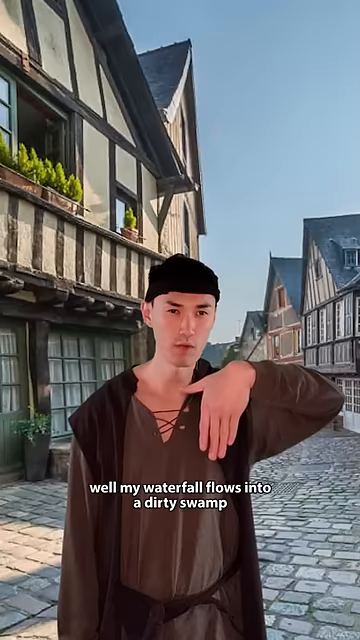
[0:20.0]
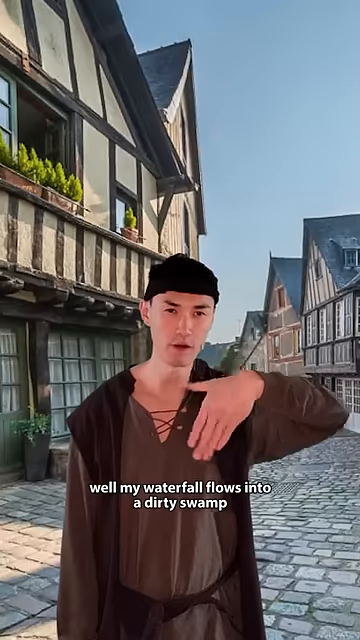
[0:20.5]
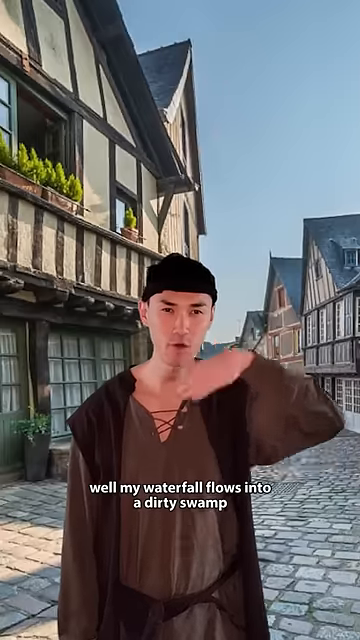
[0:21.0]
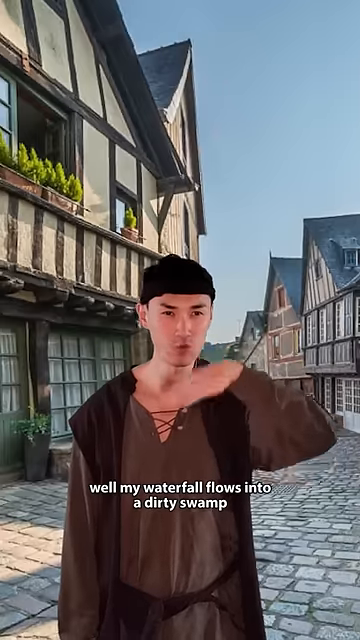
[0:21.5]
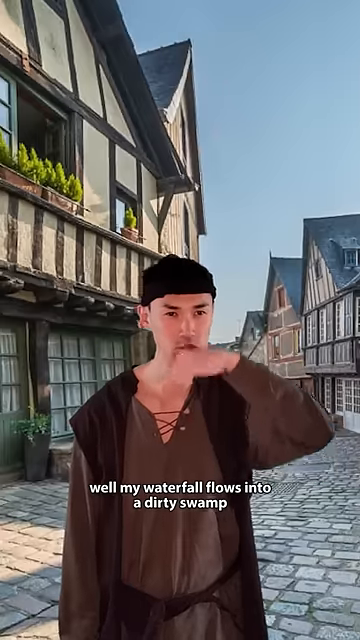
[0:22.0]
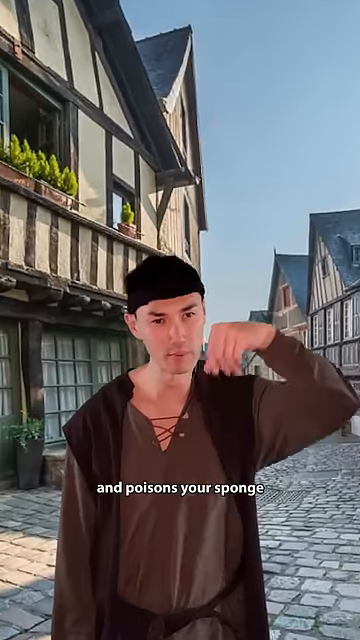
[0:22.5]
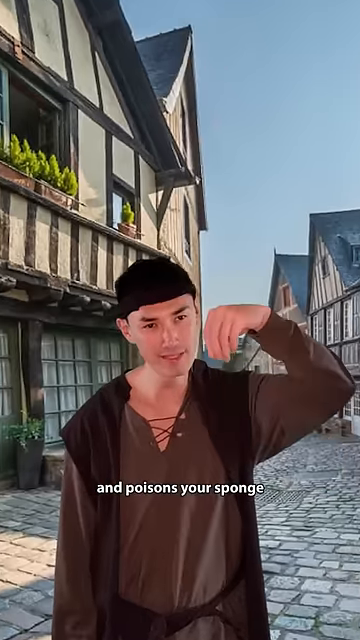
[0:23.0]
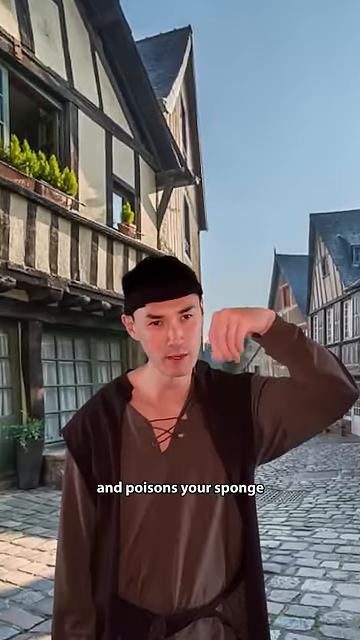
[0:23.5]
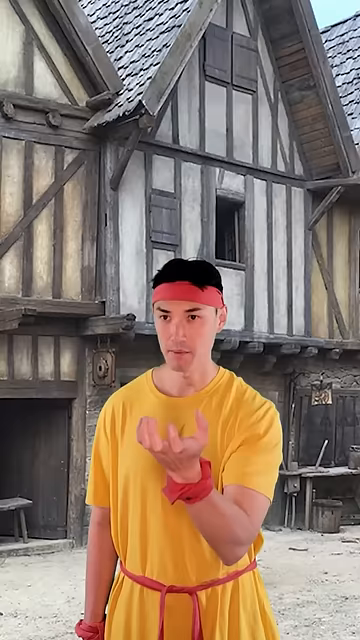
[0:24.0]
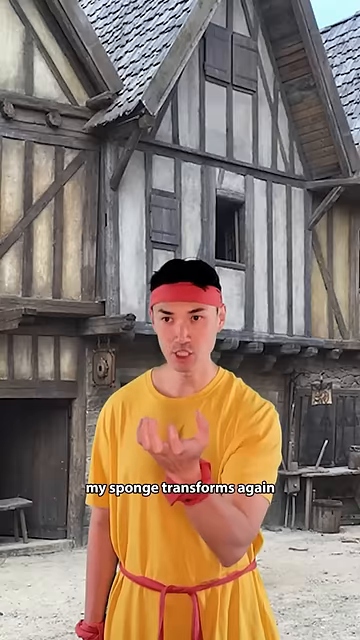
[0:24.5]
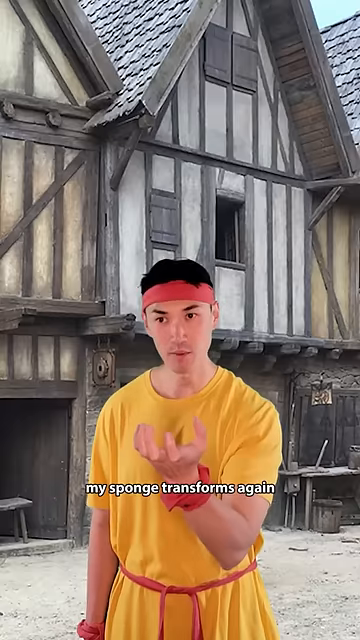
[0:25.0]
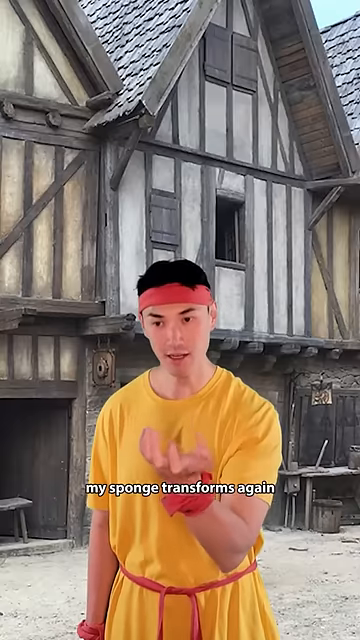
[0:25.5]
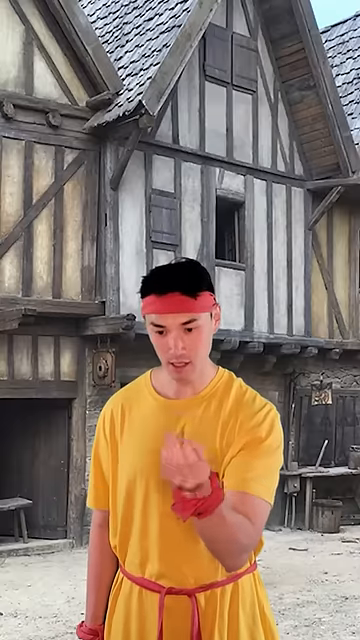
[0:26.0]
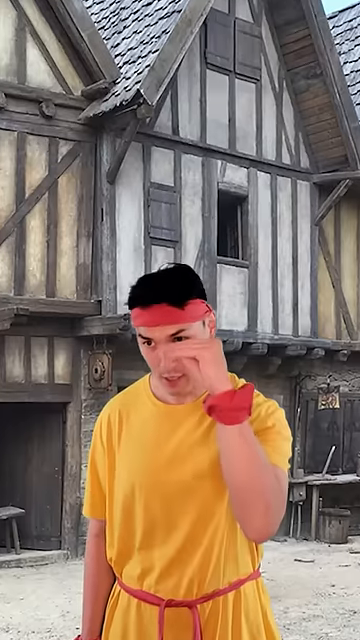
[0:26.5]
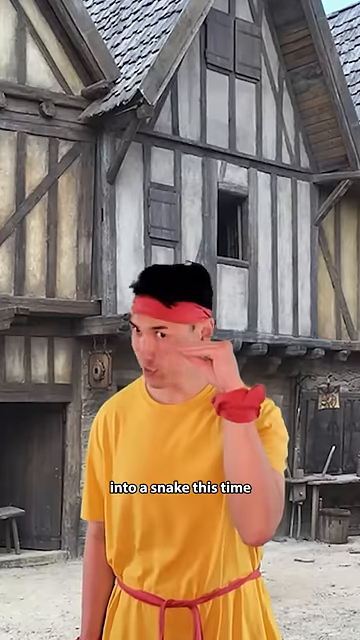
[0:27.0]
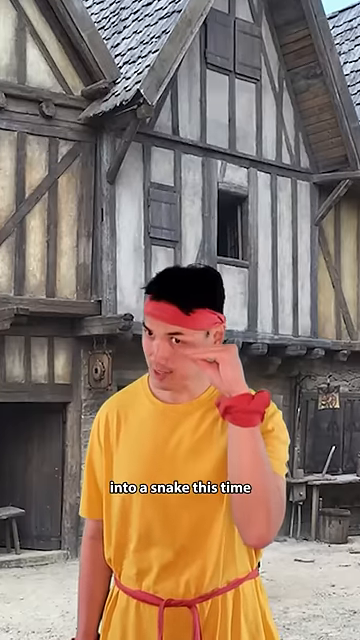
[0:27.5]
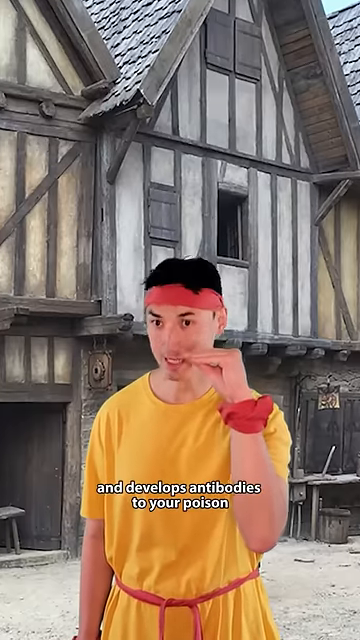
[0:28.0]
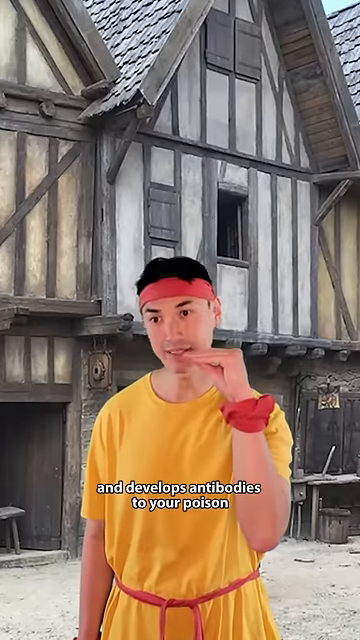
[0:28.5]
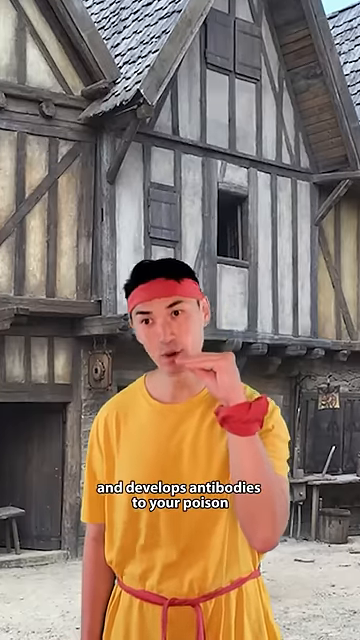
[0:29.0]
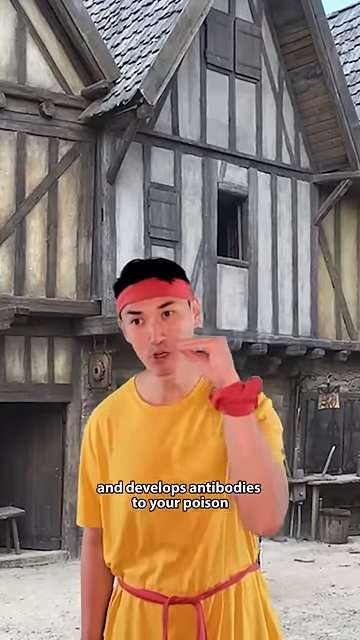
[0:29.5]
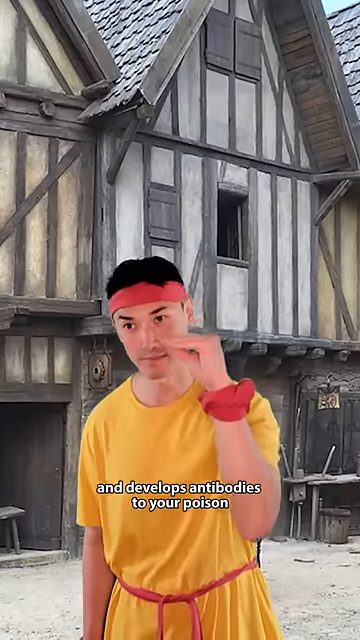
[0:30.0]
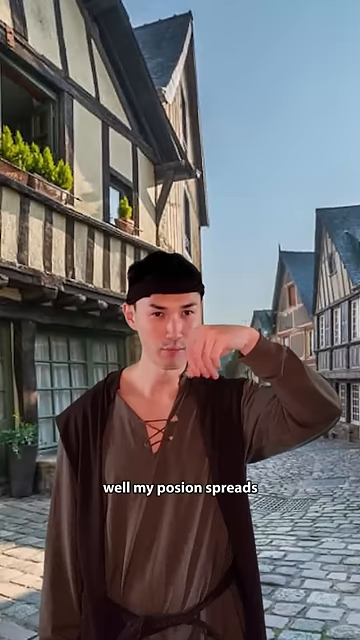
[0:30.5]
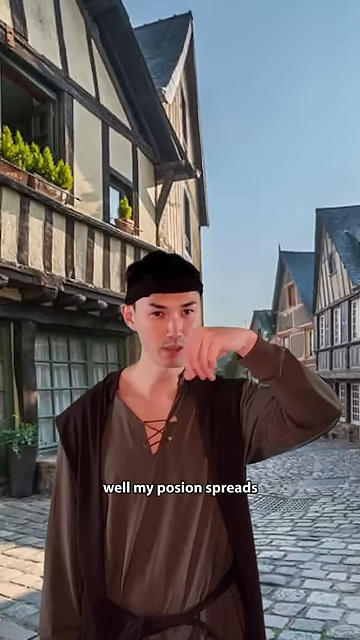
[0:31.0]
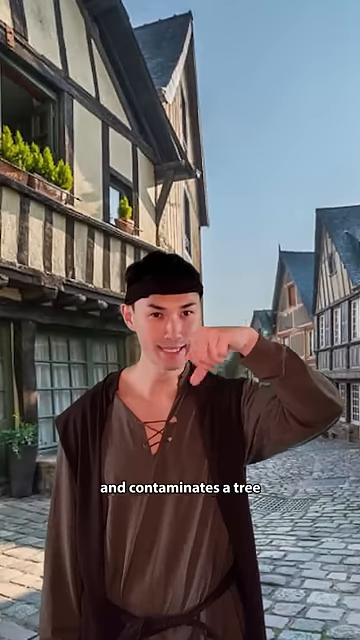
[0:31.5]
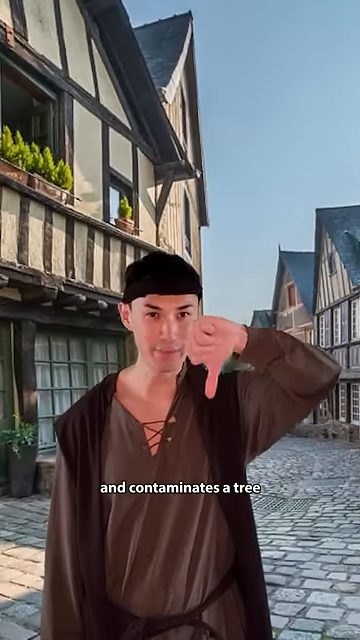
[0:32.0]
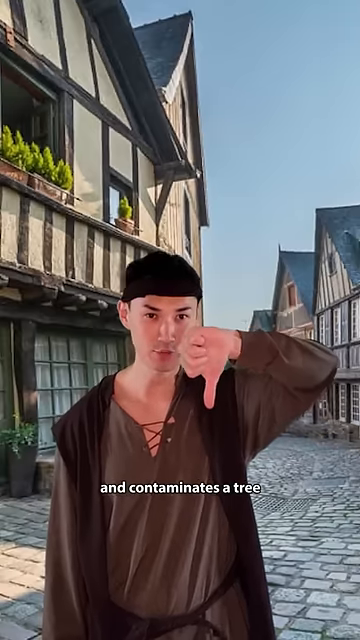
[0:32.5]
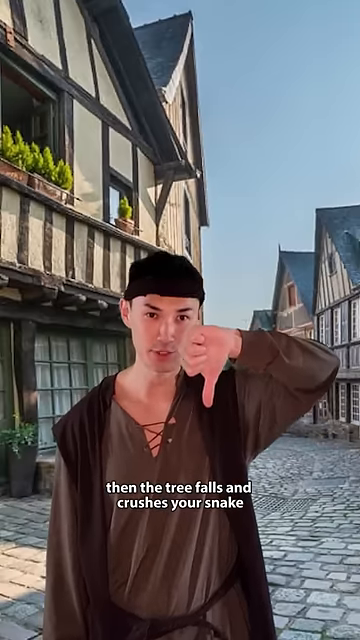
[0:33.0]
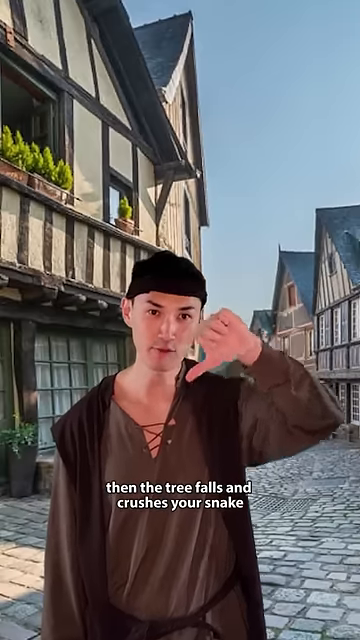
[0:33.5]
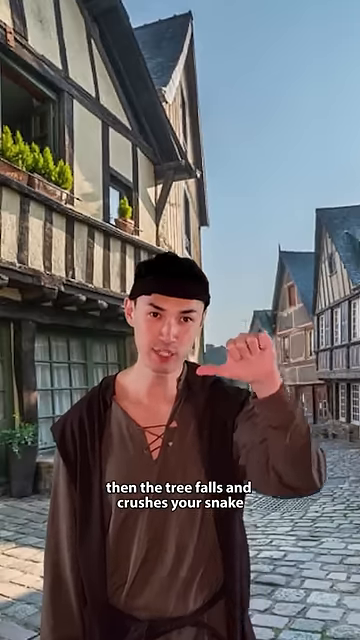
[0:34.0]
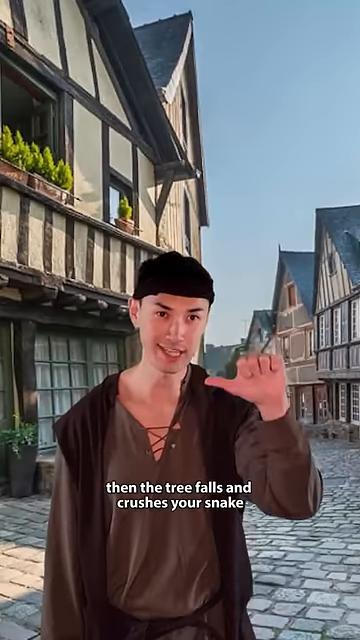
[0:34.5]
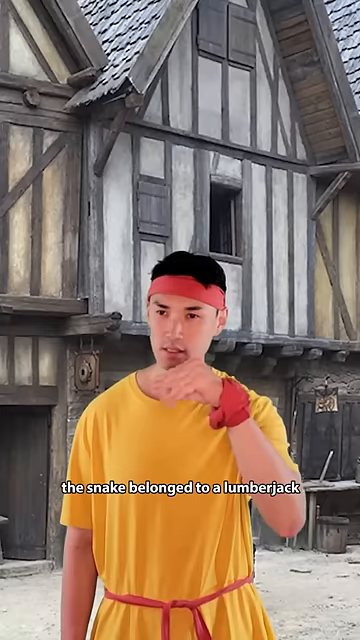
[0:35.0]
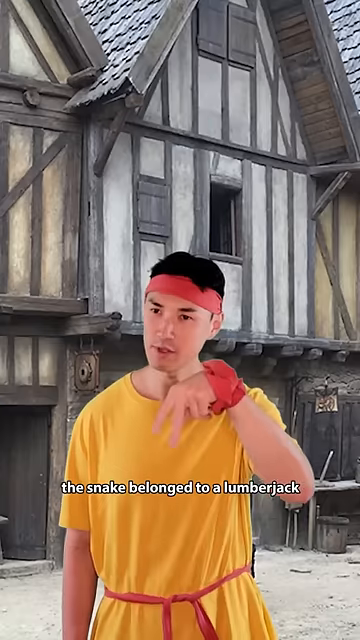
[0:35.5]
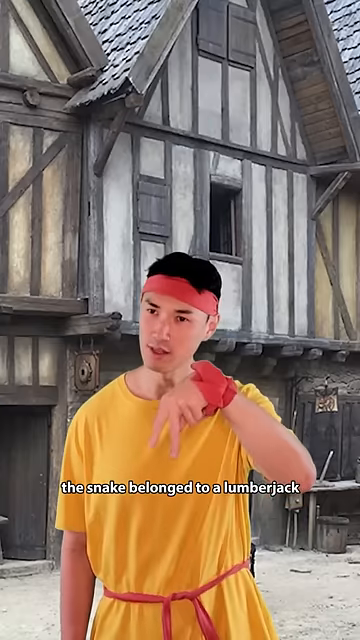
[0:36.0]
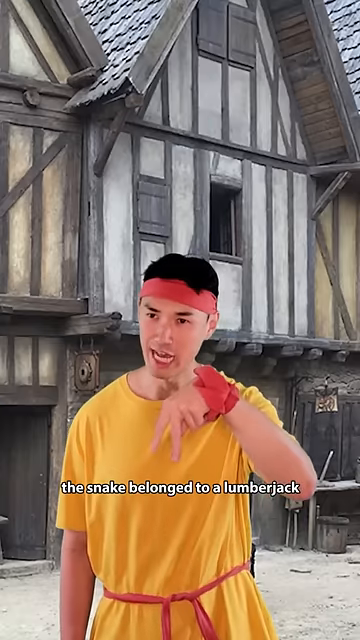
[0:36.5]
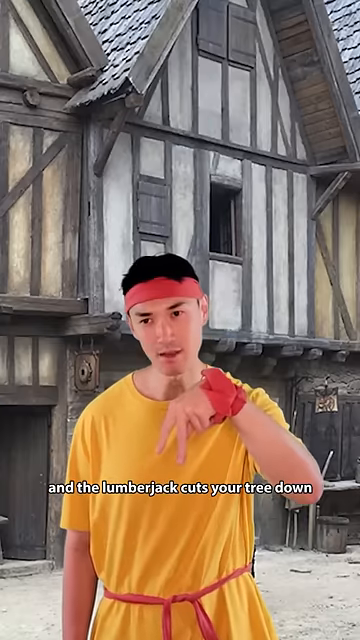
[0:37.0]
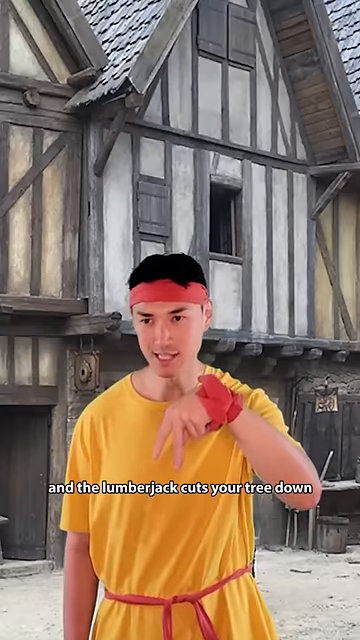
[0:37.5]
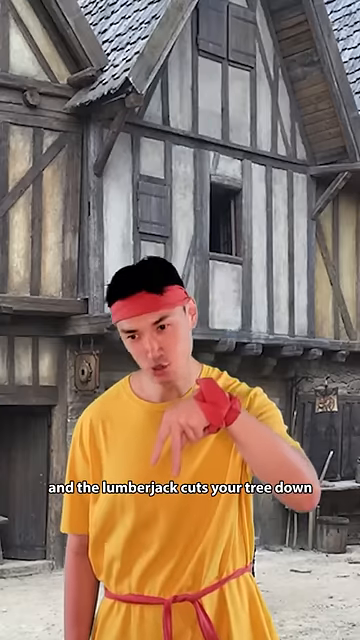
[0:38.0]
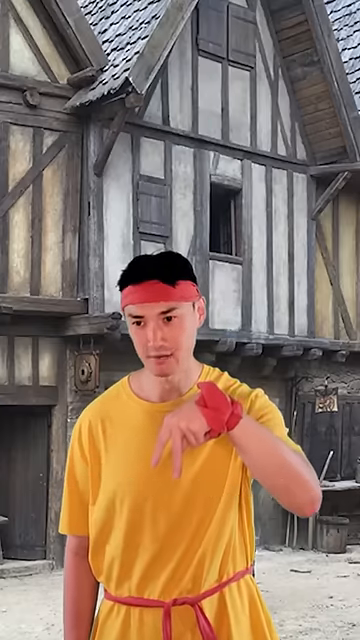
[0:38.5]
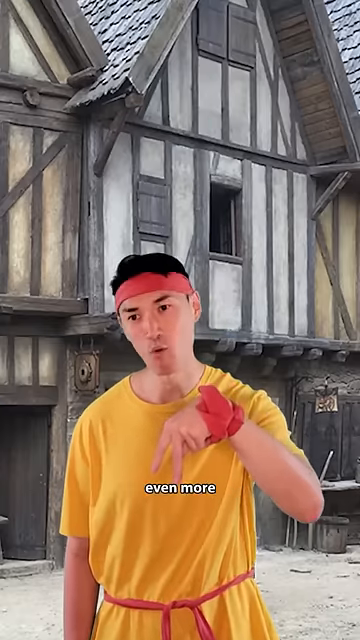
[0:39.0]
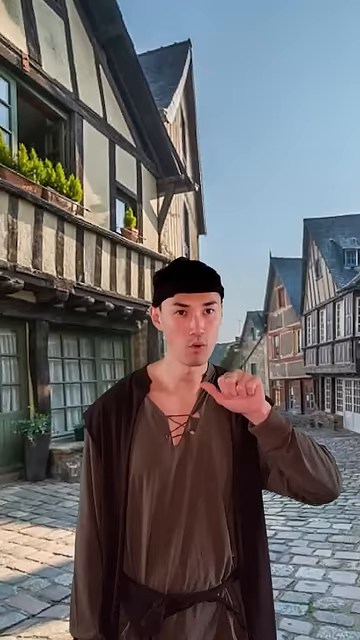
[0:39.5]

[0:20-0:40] The game continues between the guy in the yellow shirt and the guy in the brown, peasant-like outfit, with captions explaining everything that happens. As they explain, they make hand motions to show what they are changing their hand into. The brown-clad guy says, "Well, my waterfall flows into a dirty swamp and poisons your sponge." The other answers, "My sponge transforms again into a snake this time and develops antibodies to your poison." Then comes, "Well, my poison contaminates the tree, then the tree falls and crushes your snake," followed by the claim that the snake belonged to a lumberjack, and the lumberjack cuts the tree down even more. Each time they explain what their hand is, they make a matching hand gesture as they try to win the game.